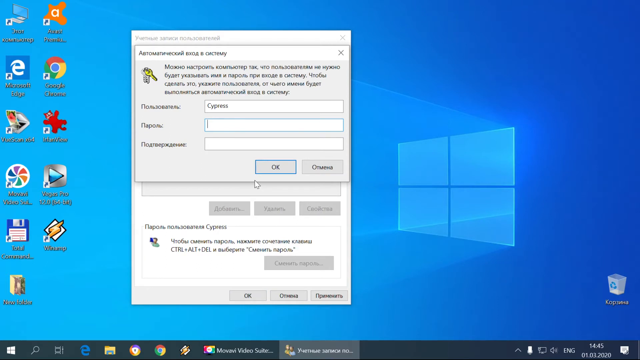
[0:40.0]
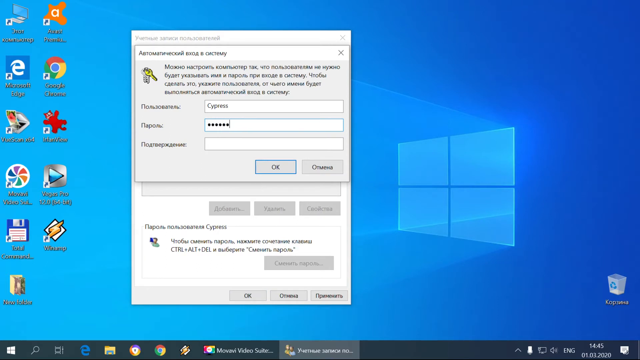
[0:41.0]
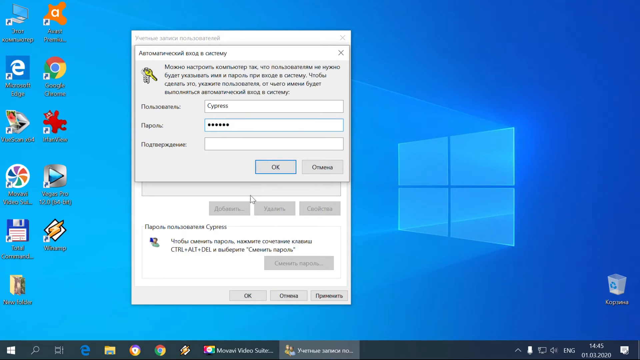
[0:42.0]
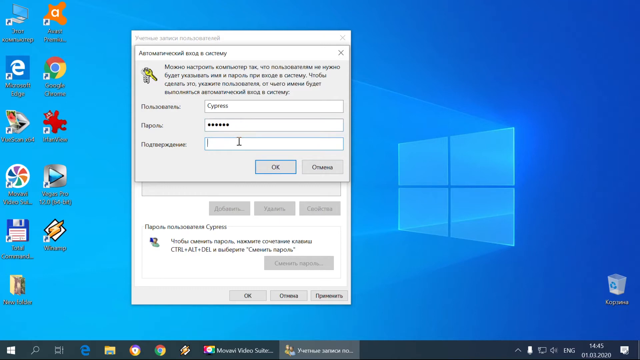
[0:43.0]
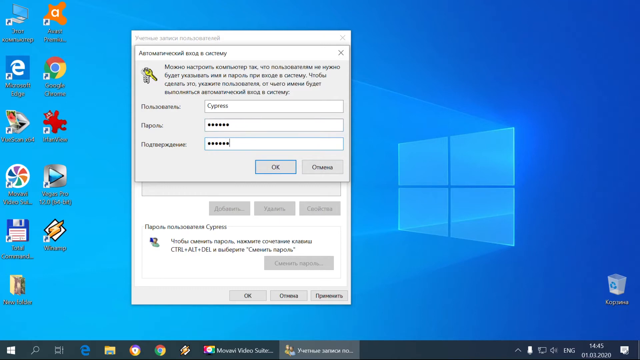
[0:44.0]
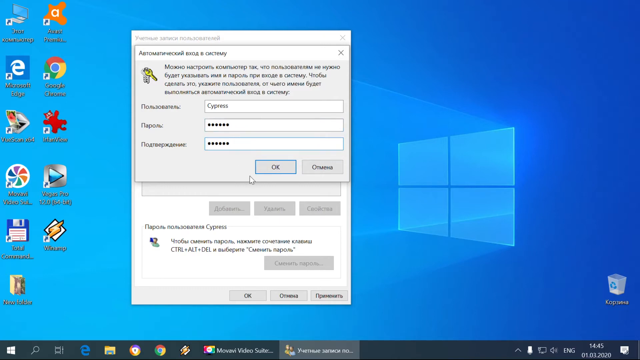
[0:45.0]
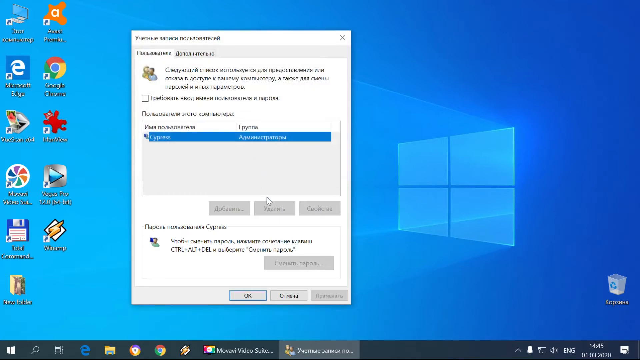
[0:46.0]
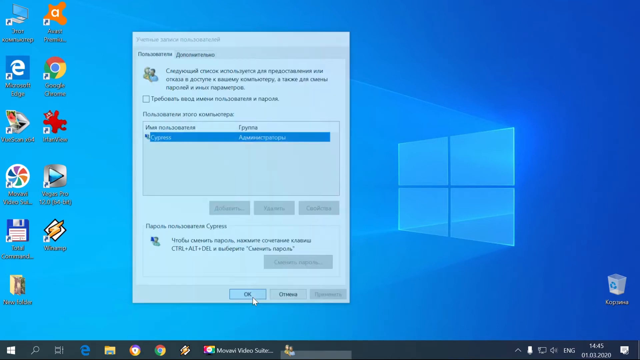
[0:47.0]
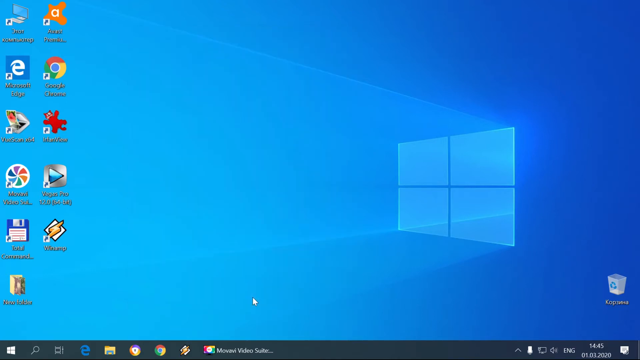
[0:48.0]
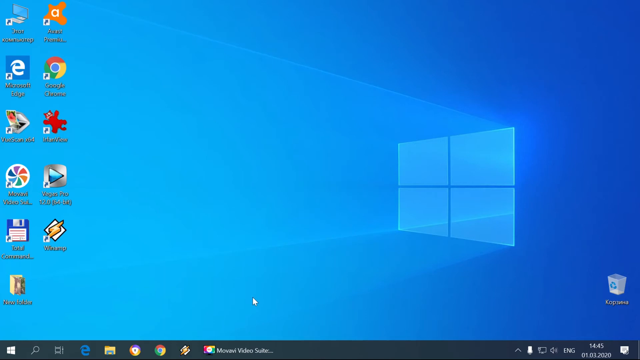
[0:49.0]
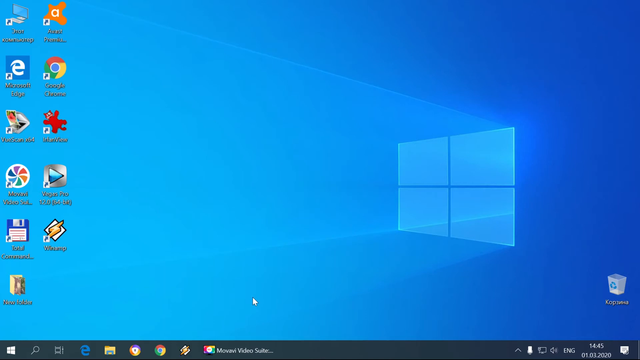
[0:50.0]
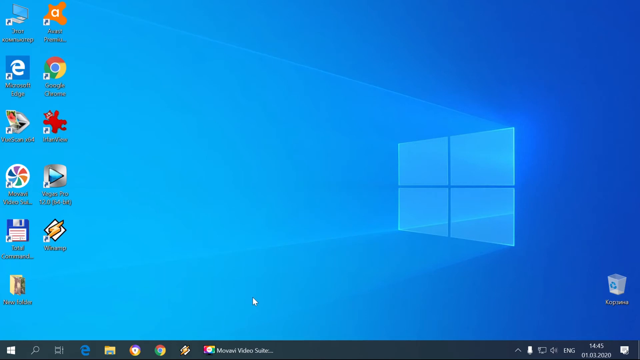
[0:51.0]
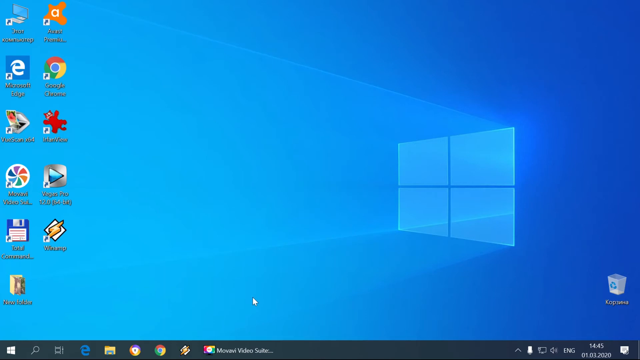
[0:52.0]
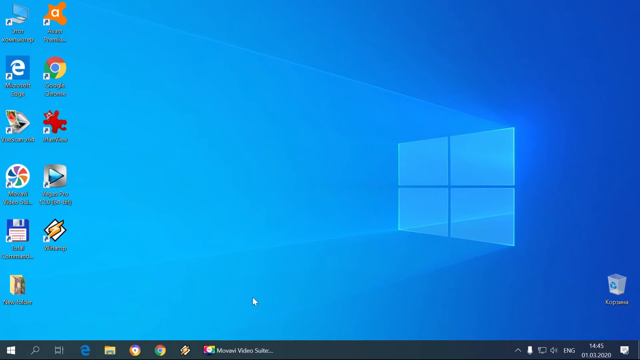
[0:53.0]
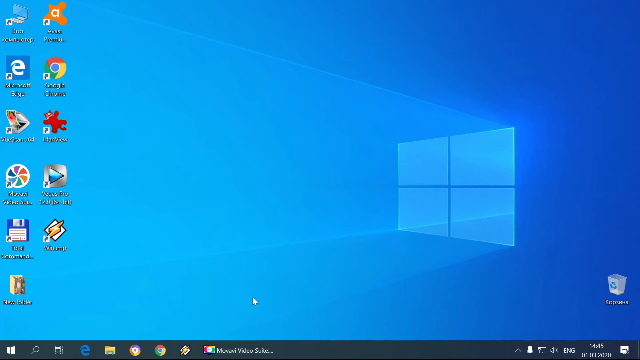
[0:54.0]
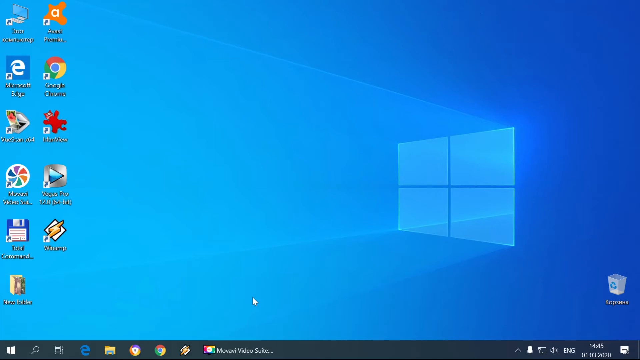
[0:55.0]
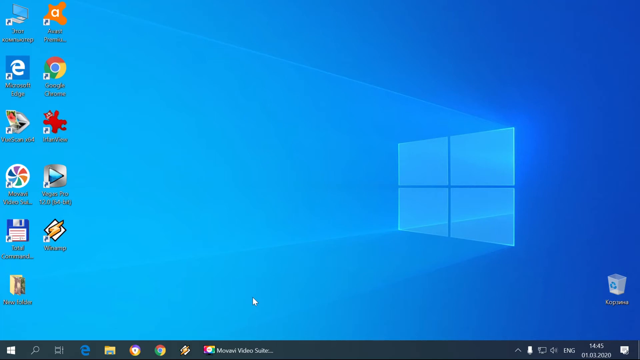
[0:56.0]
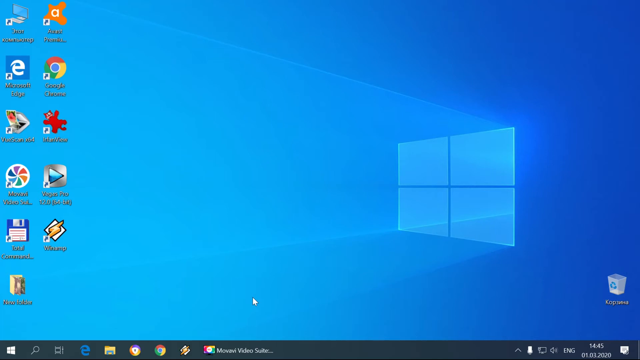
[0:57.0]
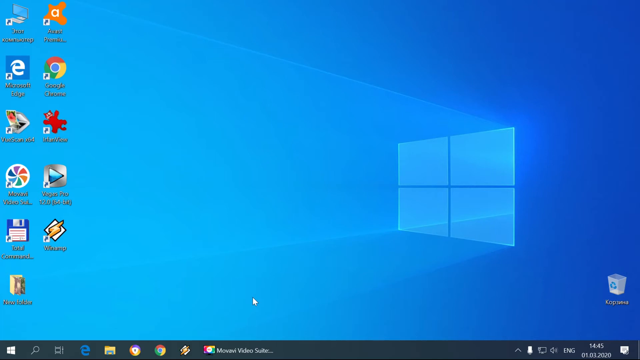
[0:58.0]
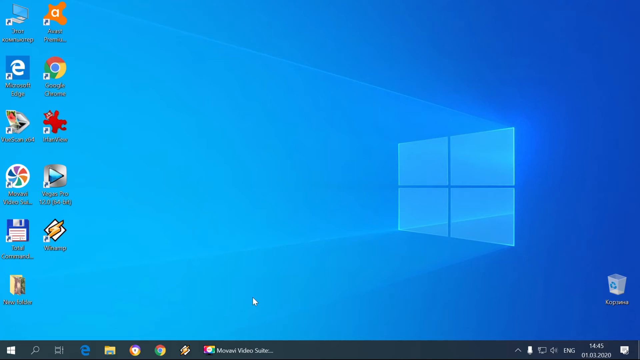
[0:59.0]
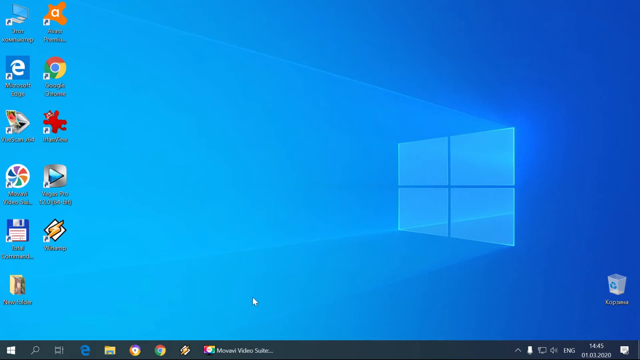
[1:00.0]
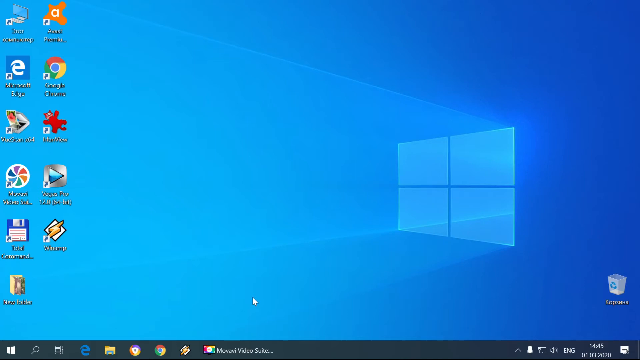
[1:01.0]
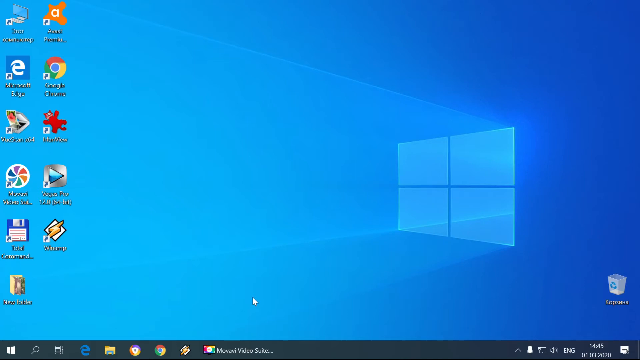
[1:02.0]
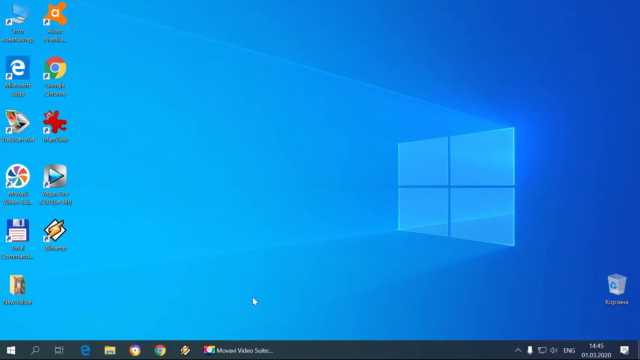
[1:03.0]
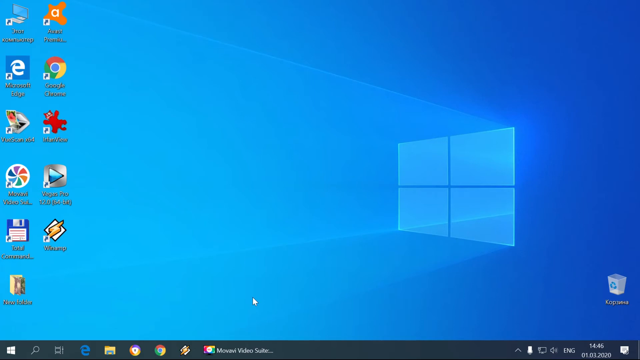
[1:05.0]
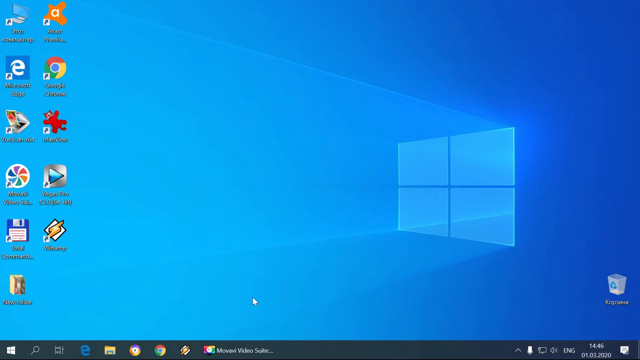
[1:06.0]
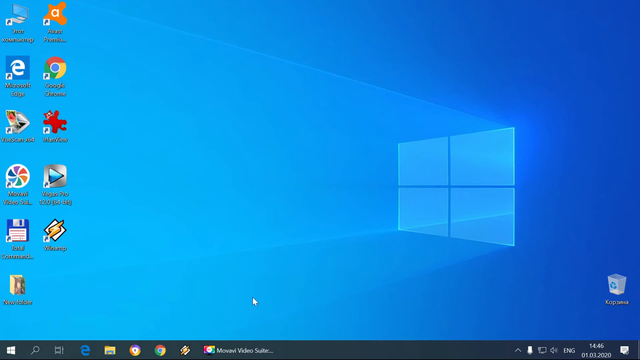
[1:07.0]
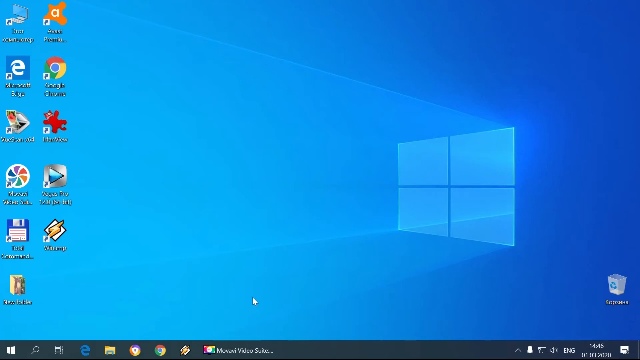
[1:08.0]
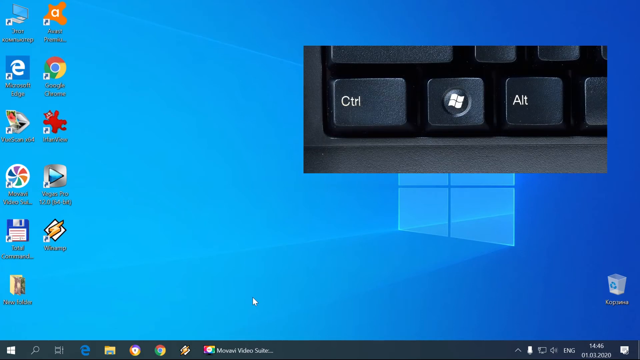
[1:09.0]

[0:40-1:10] A screen capture shows someone's Windows computer with the classic blue Windows background and about 11 applications on the left side of the screen. A window is open where the person types a password of about six characters, then types it a second time. They select OK, then select OK on another pop-up box that was behind the password box, and then wait for a while with the cursor not moving. A small black keyboard, maybe just a few keys, pops up on the center right of the screen and then disappears.